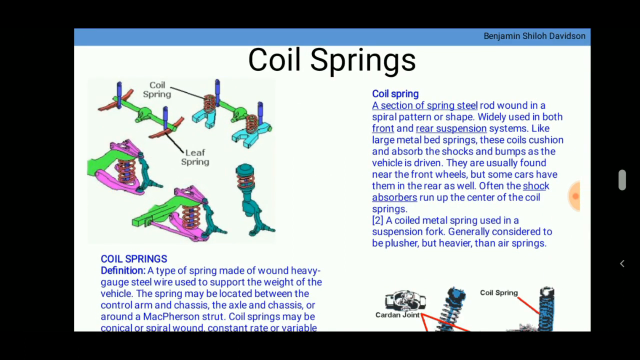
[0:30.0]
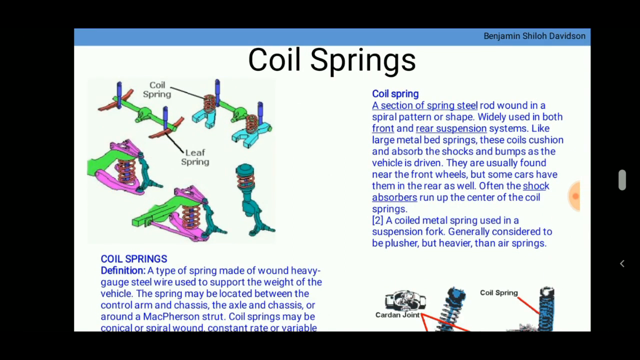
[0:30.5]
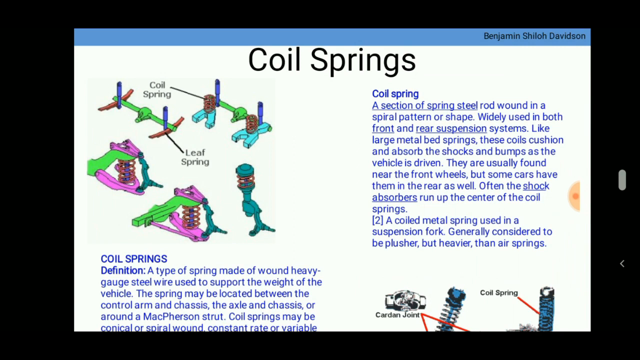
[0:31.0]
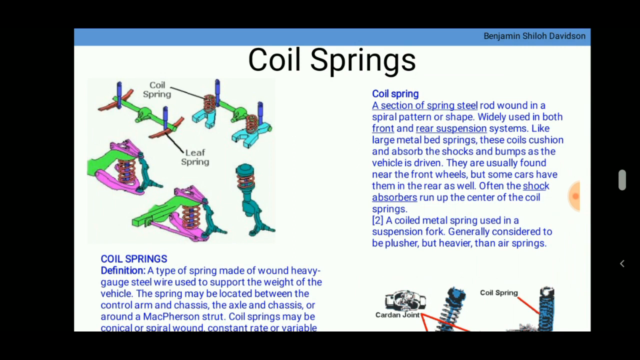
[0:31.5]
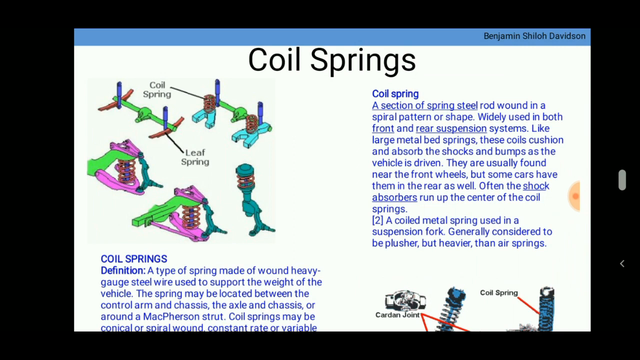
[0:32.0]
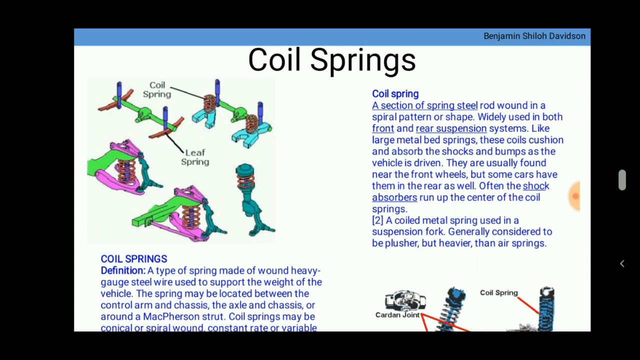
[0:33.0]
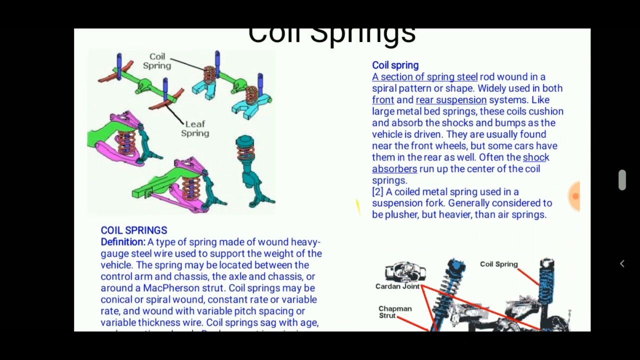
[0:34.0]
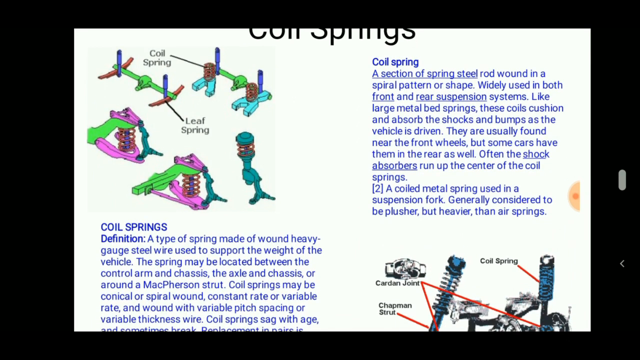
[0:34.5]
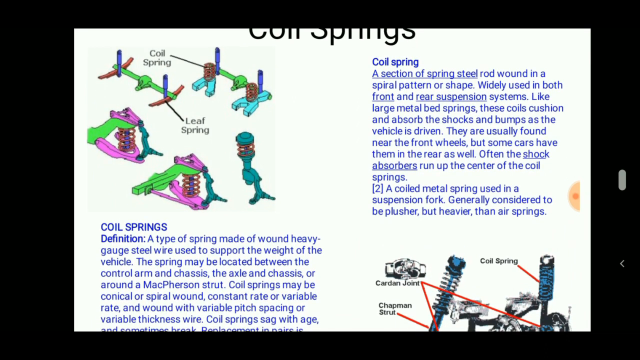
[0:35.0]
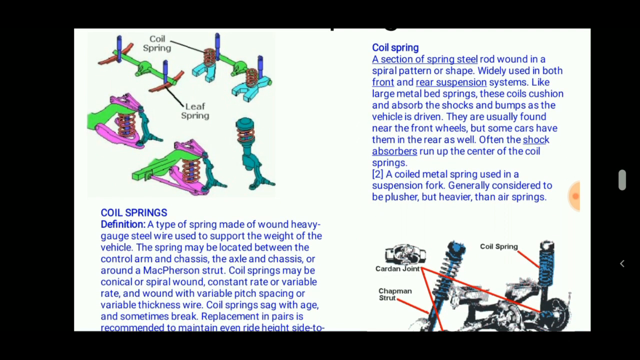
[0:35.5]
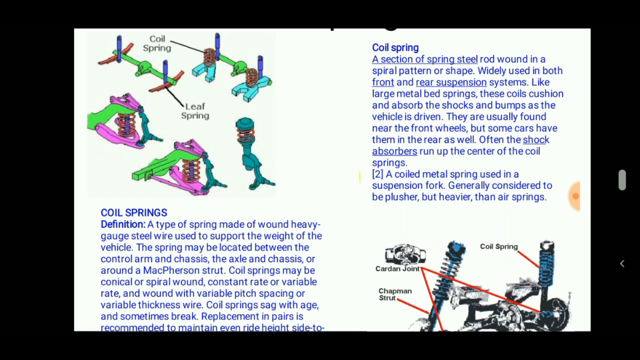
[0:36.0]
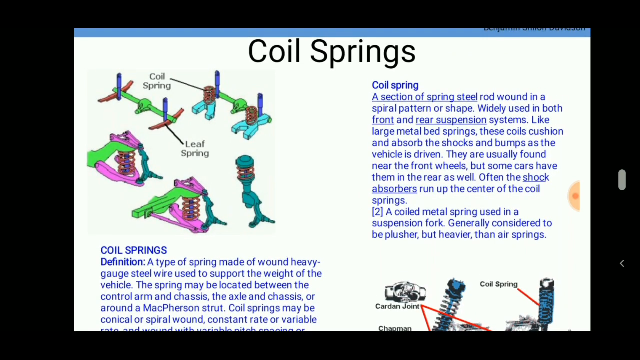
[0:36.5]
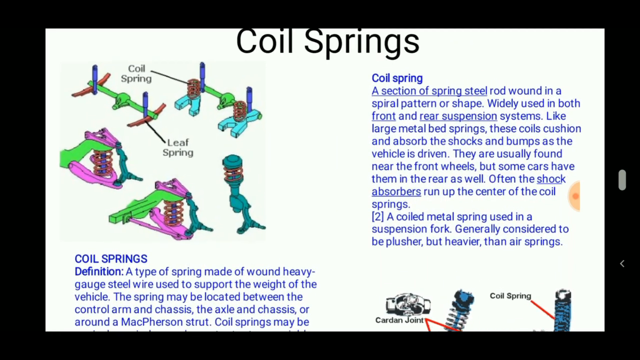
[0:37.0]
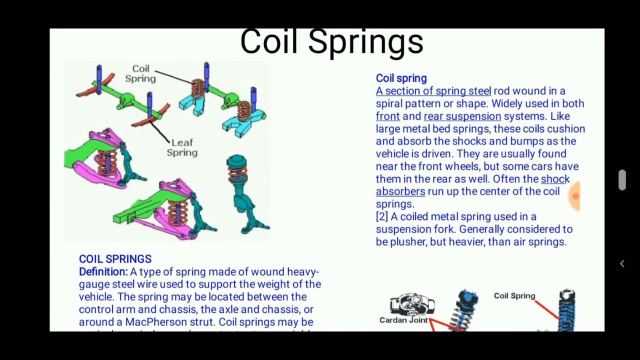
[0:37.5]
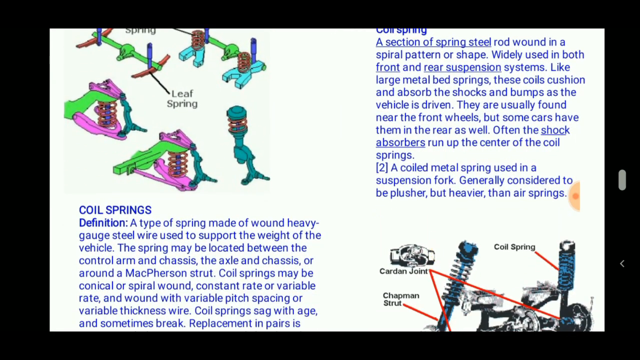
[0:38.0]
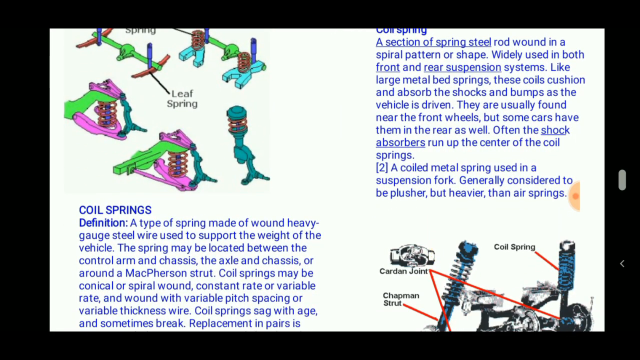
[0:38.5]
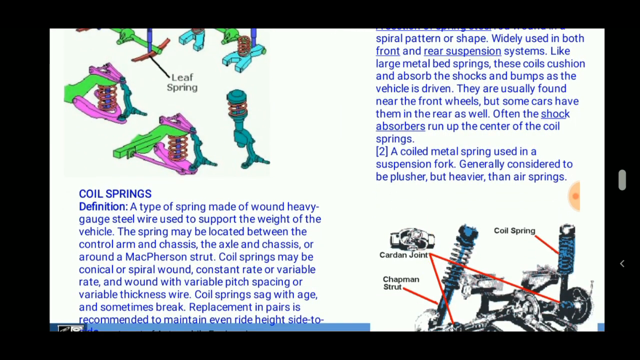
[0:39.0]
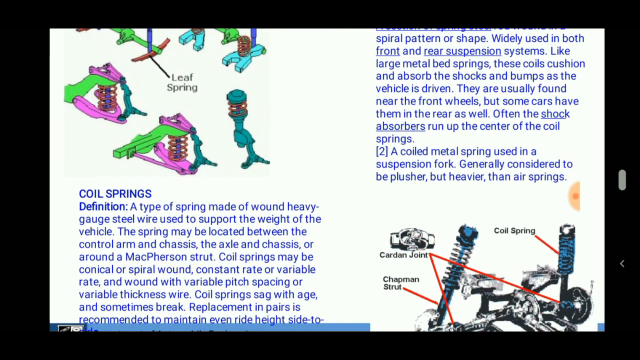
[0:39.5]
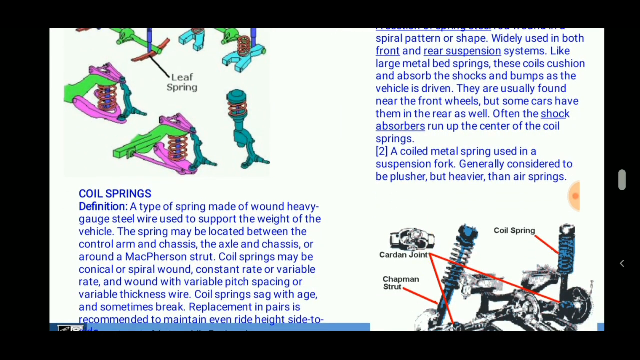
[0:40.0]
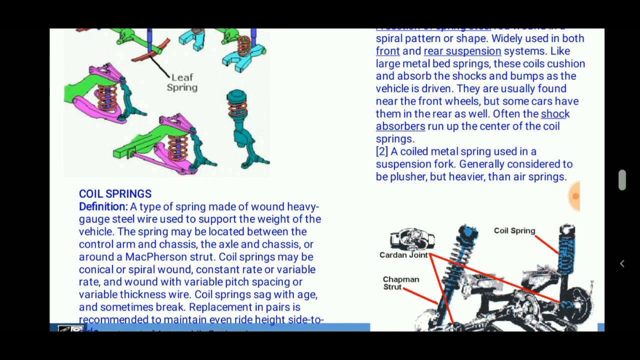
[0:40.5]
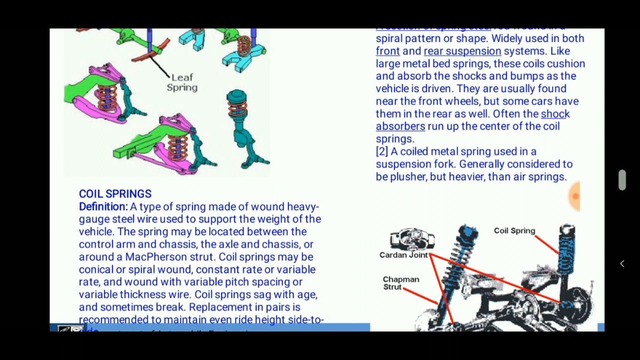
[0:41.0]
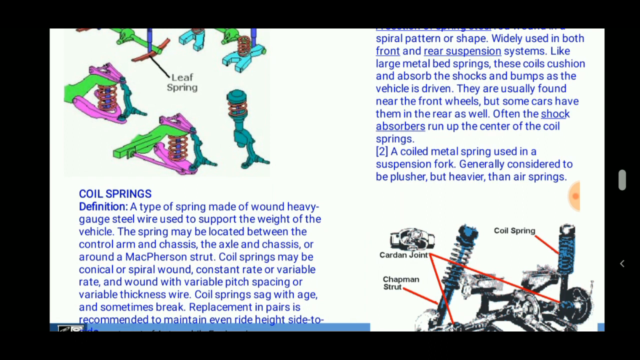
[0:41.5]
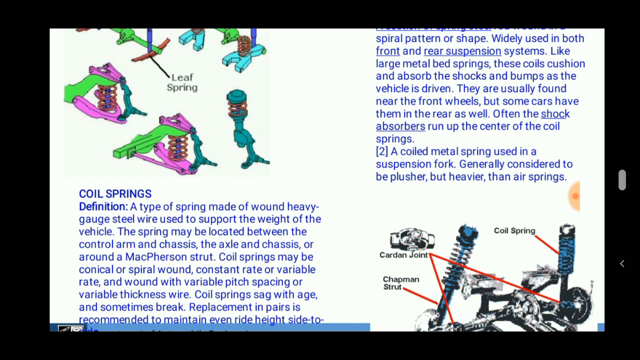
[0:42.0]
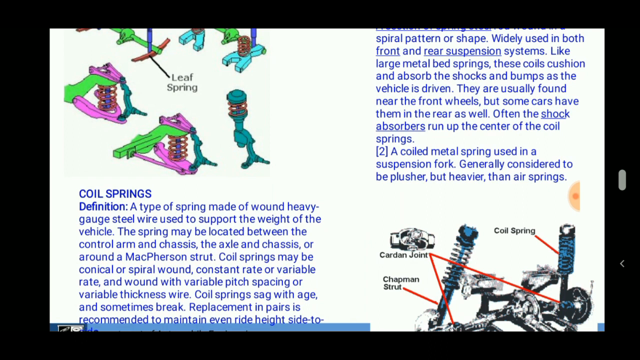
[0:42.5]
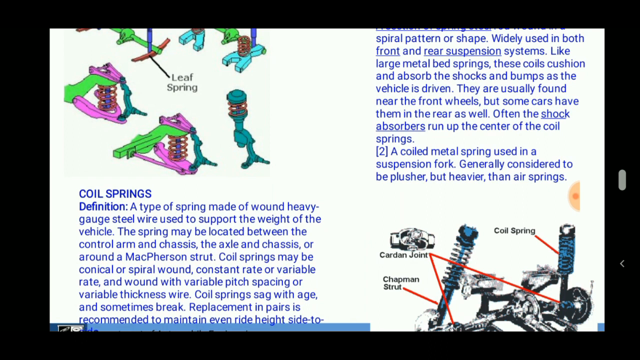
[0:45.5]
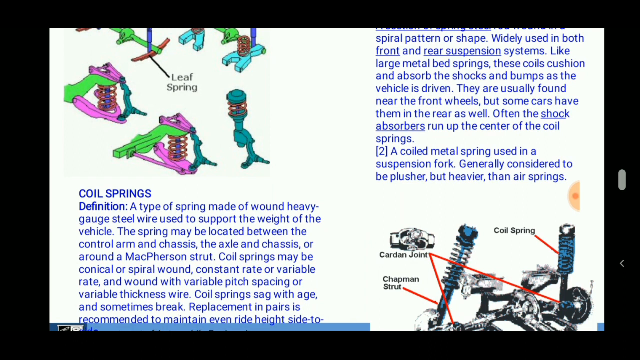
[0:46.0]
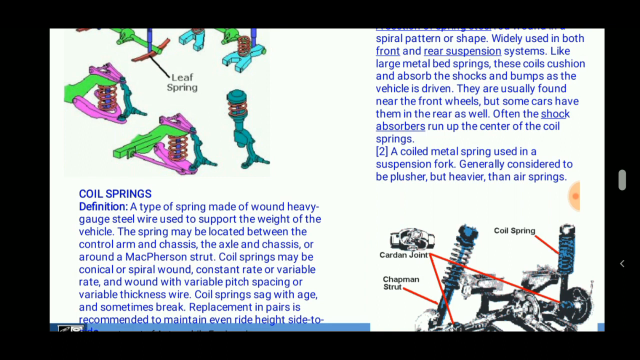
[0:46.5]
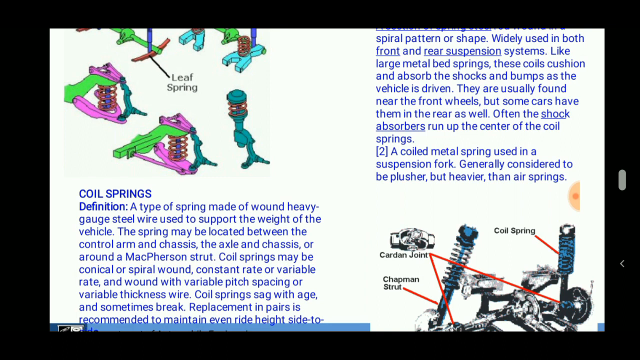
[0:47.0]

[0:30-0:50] The description of coil springs is still shown, with a picture diagram of coil springs below it. The text describes a section of spring steel wound in a spiral pattern or shape widely used in both front and rear suspension systems, which cushions and absorbs shocks and bumps and is usually found near the front wheels, with shock absorbers often running up the center of the coil springs. It also describes a coiled metal spring used in a suspension fork, generally considered to be plusher but heavier. The coil spring definition follows, stating that the spring may be located between the control arm and chassis, and that coil springs may be conical or spiral.